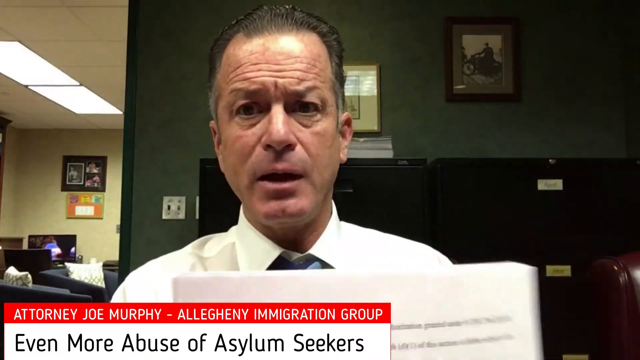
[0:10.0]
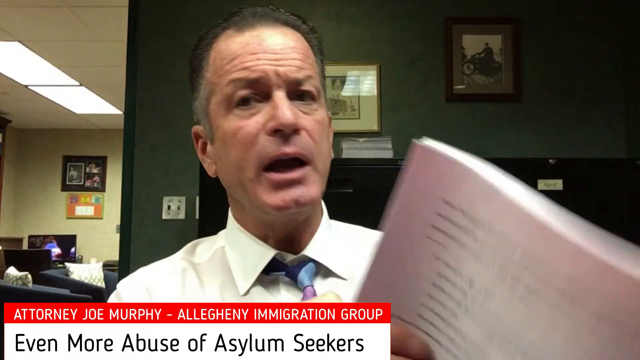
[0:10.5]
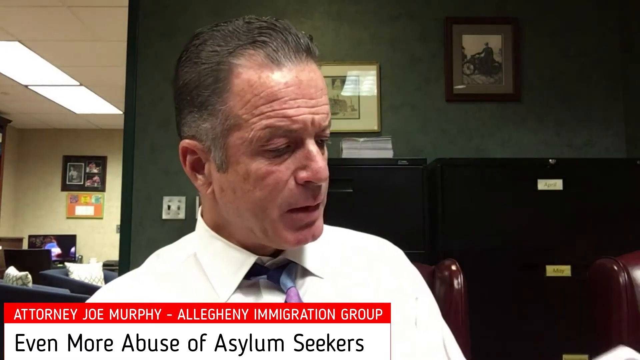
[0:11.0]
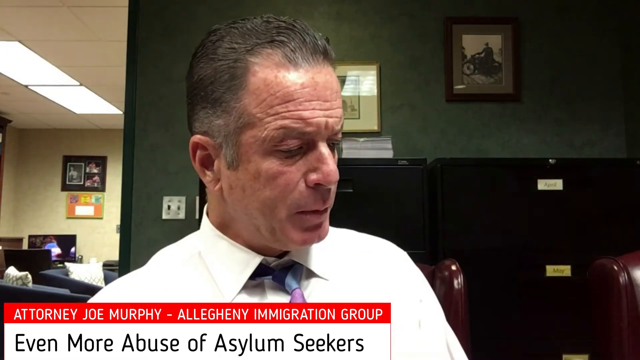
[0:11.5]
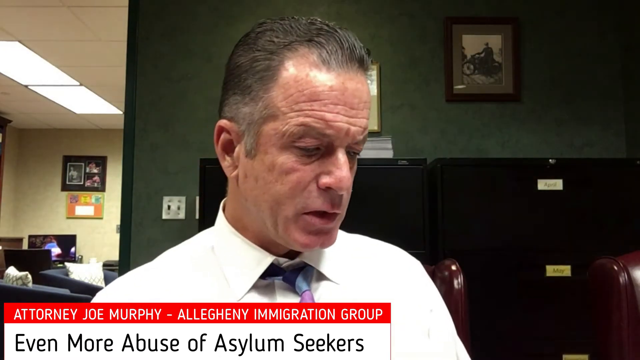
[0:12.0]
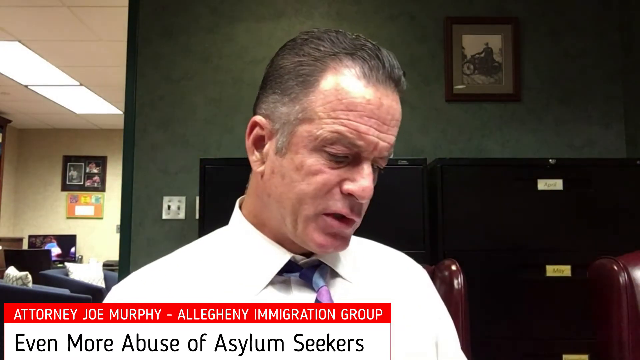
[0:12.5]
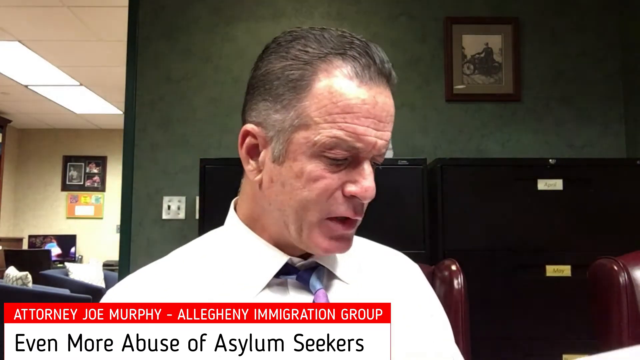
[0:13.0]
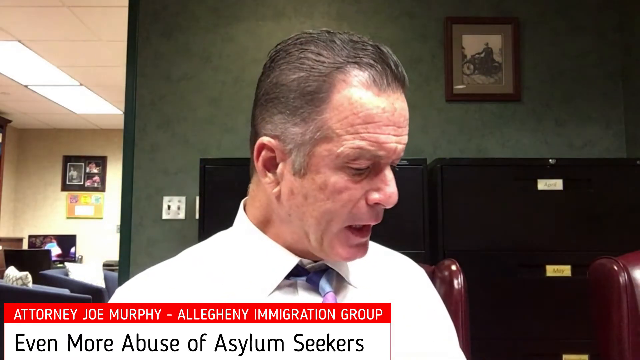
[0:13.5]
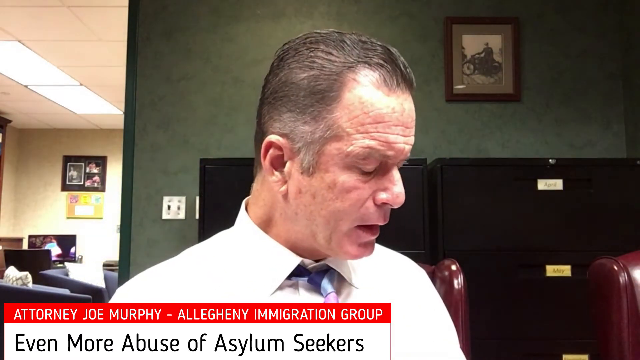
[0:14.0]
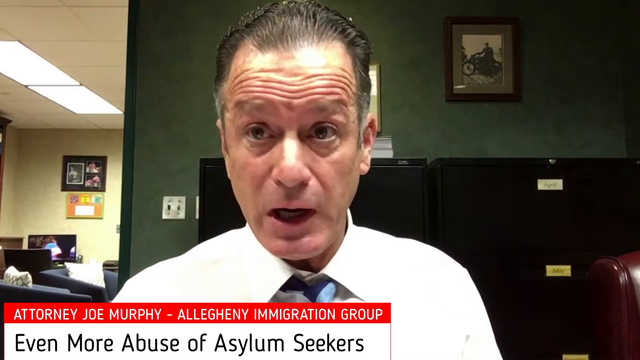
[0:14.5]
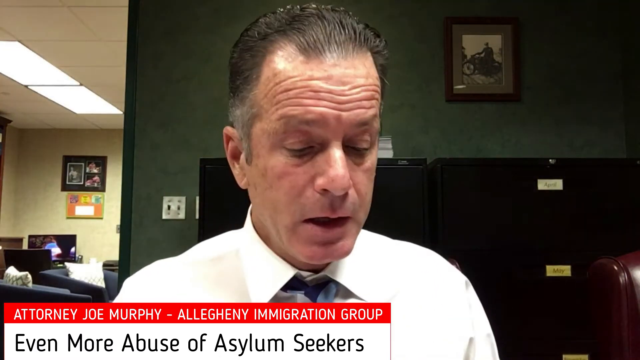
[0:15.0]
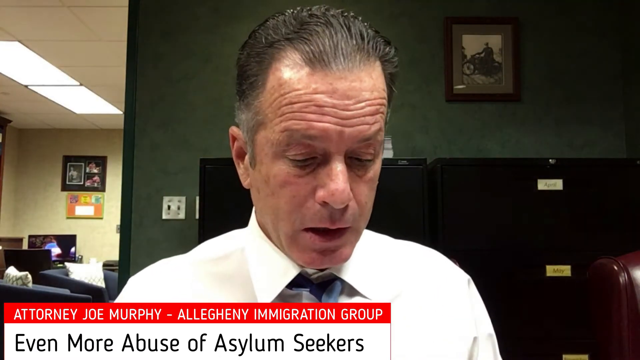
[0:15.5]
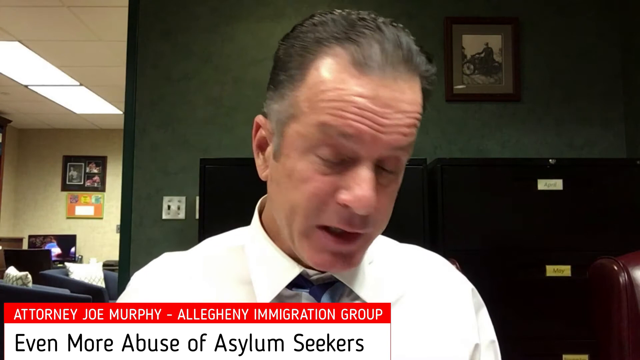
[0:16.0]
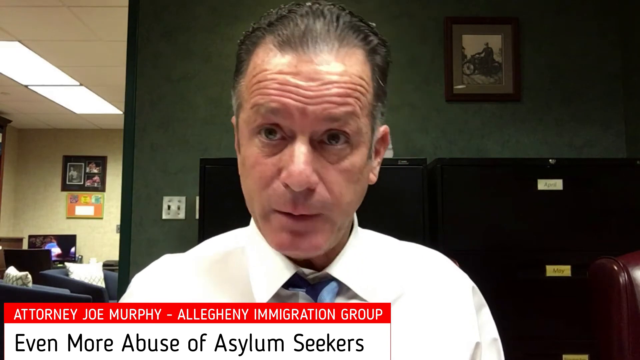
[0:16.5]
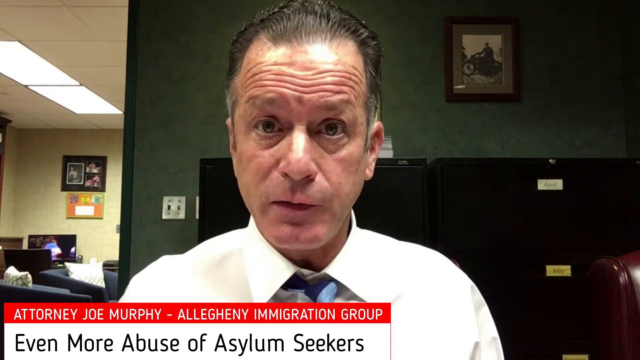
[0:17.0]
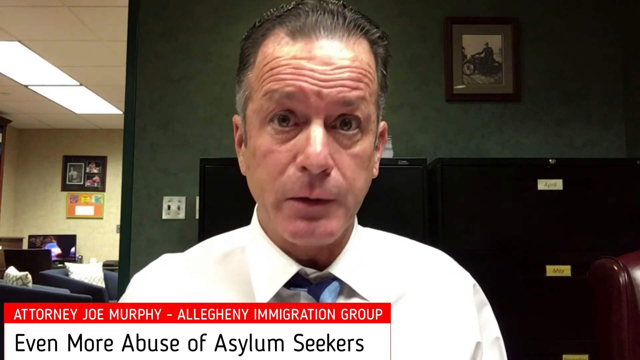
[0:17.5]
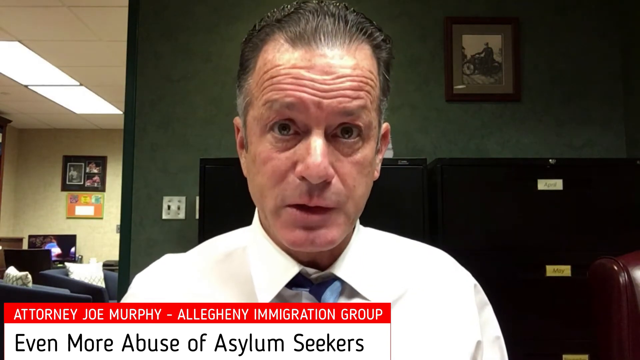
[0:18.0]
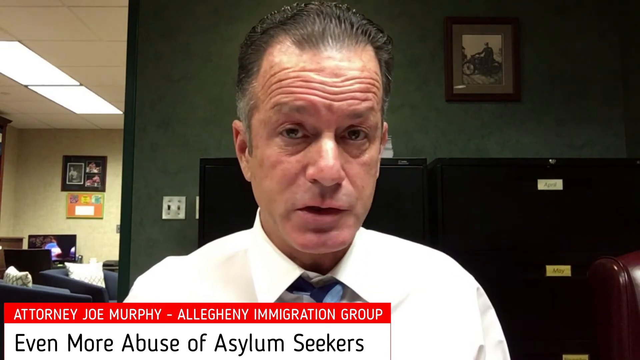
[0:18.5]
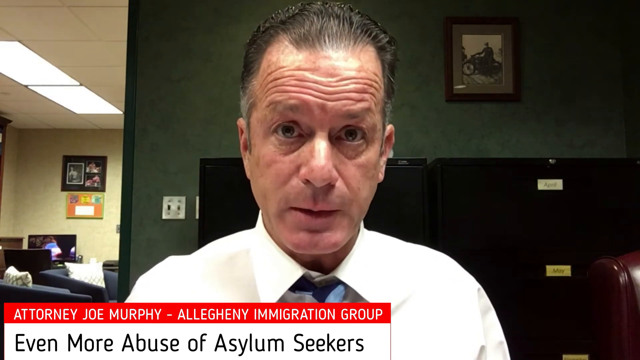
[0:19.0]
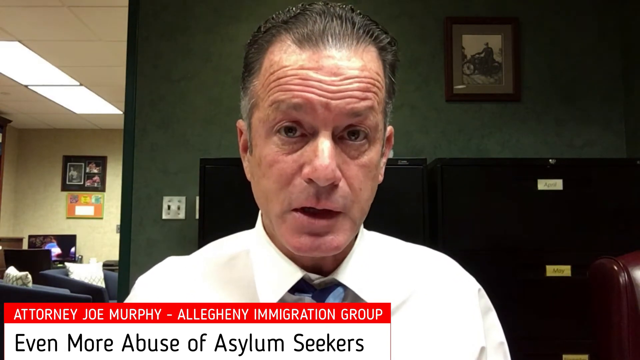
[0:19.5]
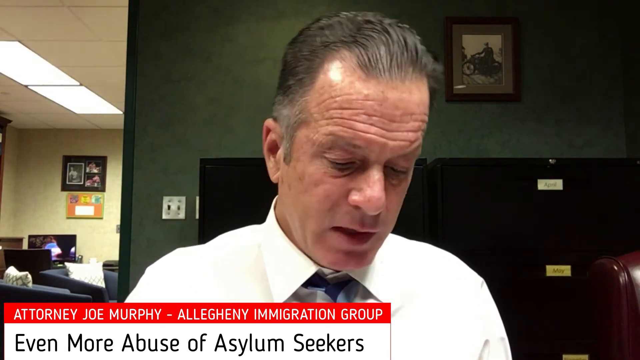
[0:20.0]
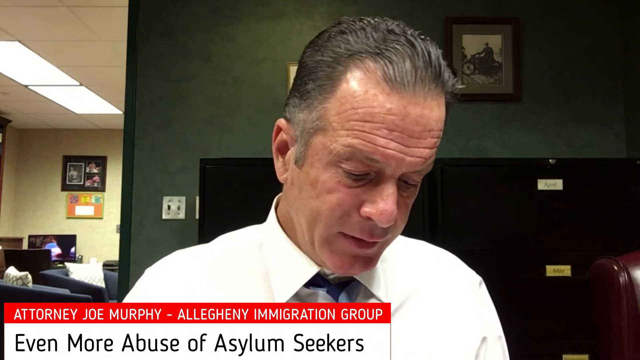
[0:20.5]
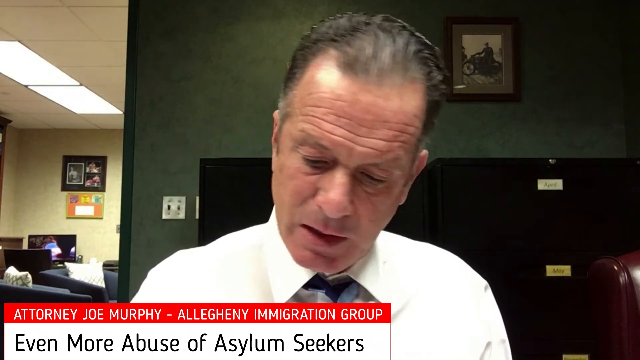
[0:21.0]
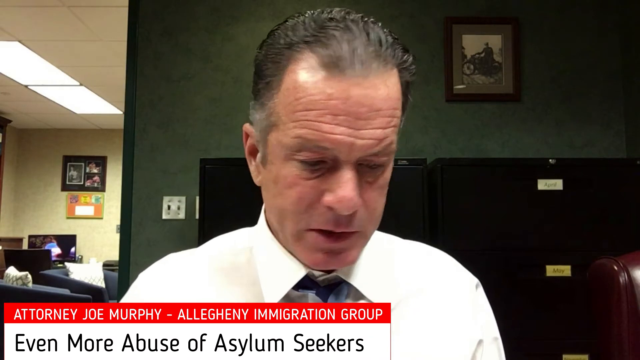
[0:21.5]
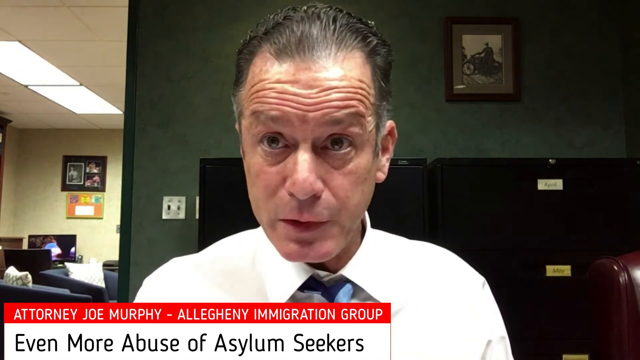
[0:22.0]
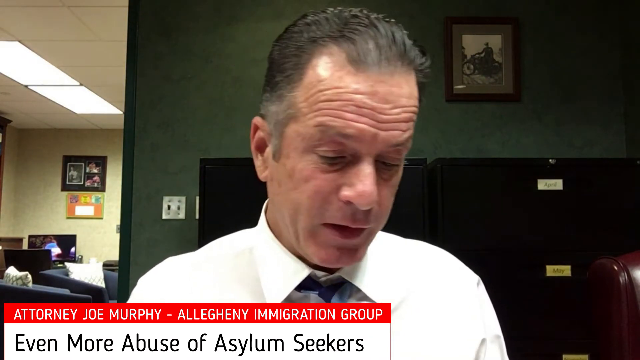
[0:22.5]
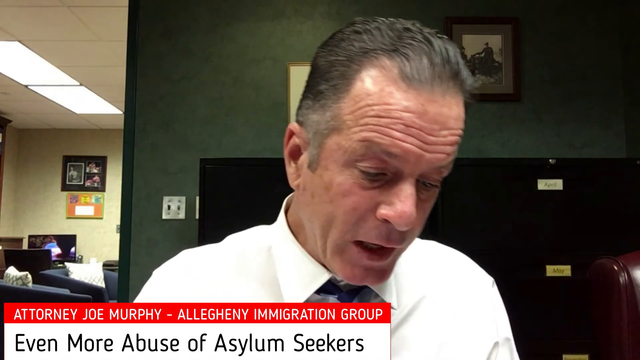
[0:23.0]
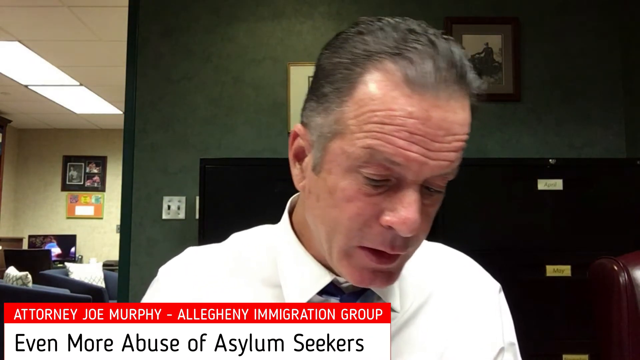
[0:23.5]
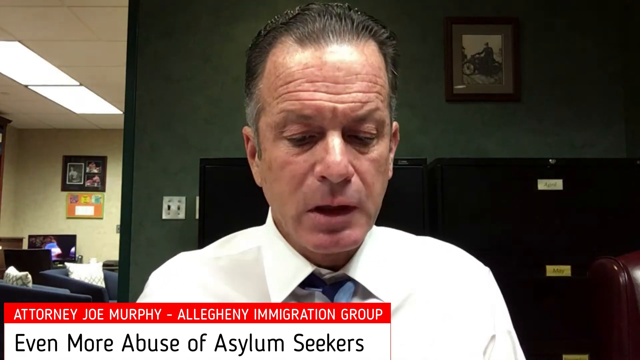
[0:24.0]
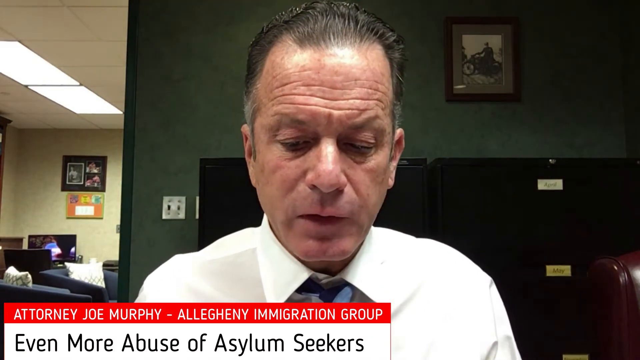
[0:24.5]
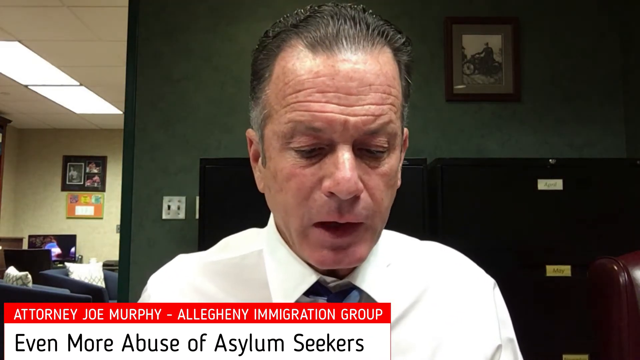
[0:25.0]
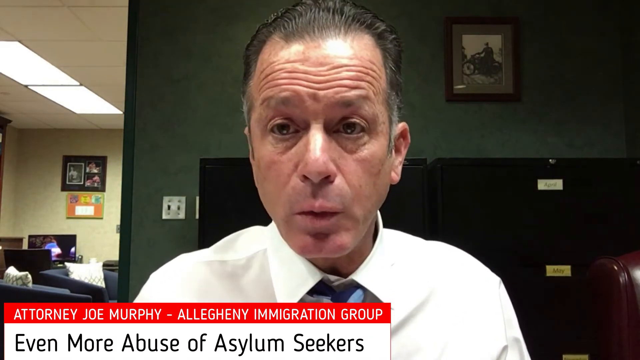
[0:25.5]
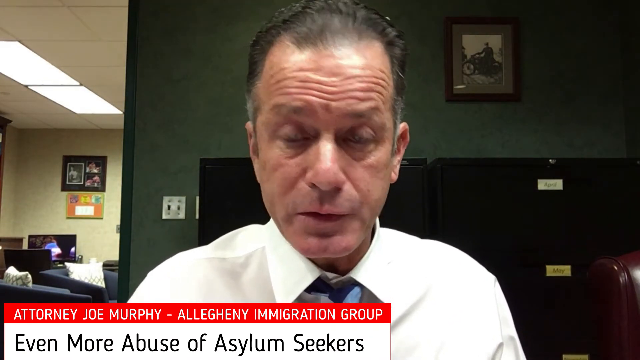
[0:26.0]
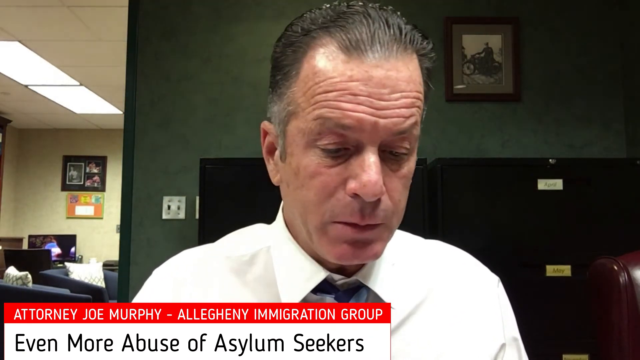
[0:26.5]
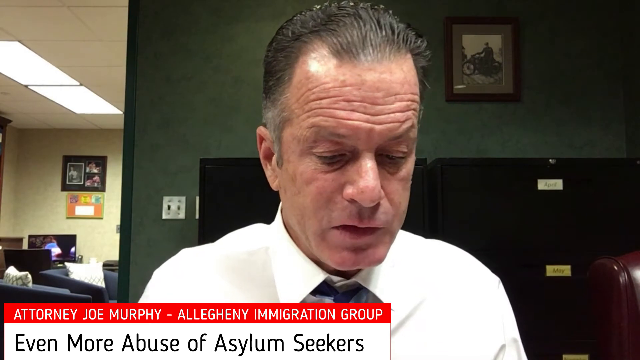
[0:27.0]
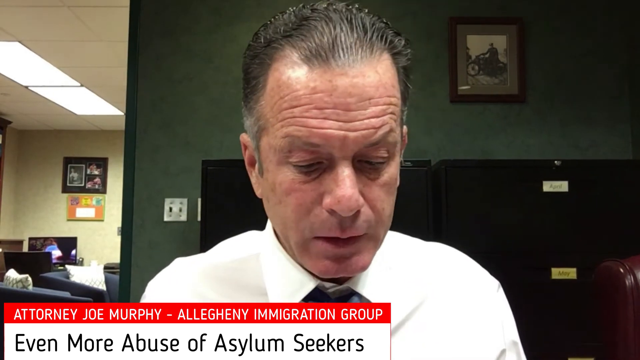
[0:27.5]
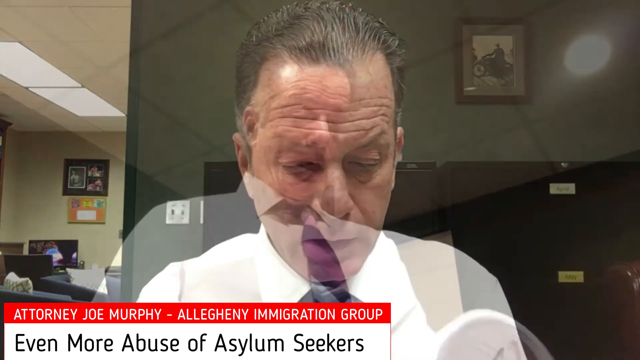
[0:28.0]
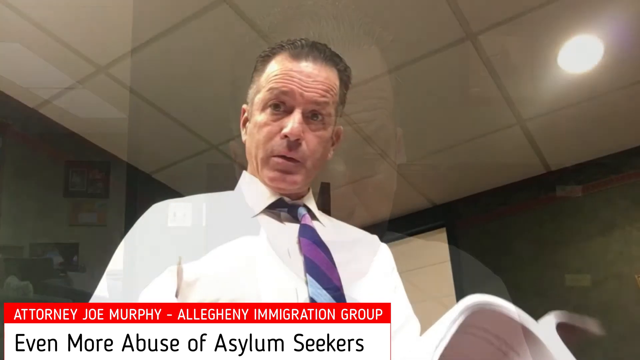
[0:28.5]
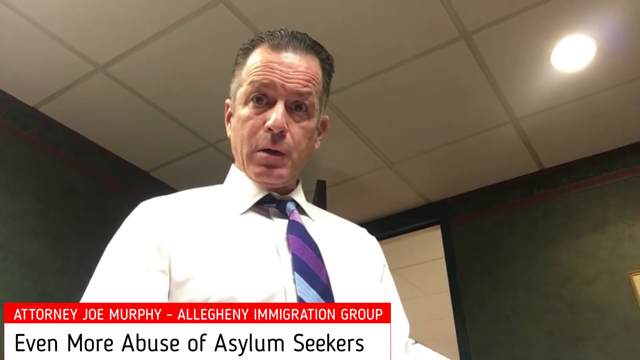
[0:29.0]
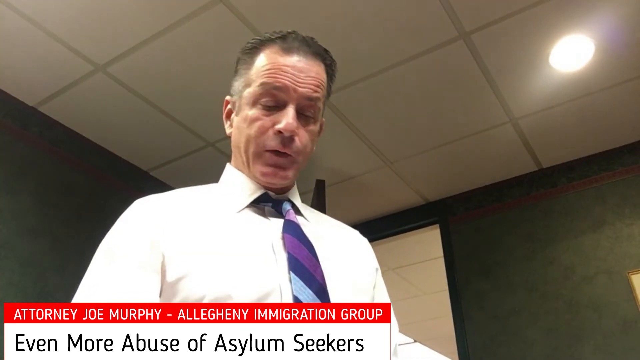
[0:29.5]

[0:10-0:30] A man is sitting on a chair, wearing a white shirt with a blue and light blue tie. His hair is dark brown with some white in it. He talks while looking at the camera, and he also looks at a document. The setting appears to be an office or the inside of a house. Behind him are black safety cupboards with labels on them, apparently for keeping documents. The wall behind him is green and has a frame showing a person in front of a bike. Text displayed on the screen includes "Attorney Joe Murphy" and "even more abuse of asylum seekers." The video then changes to show the man standing up, with a bulb or a light on the ceiling.